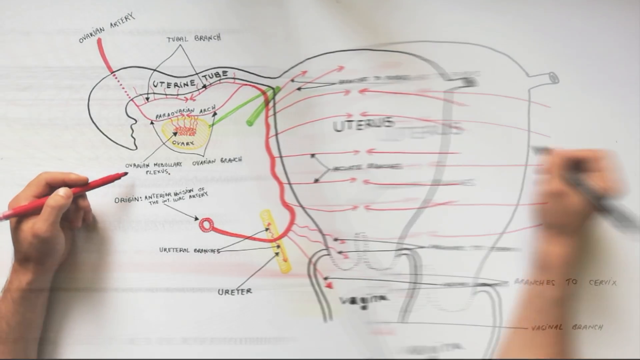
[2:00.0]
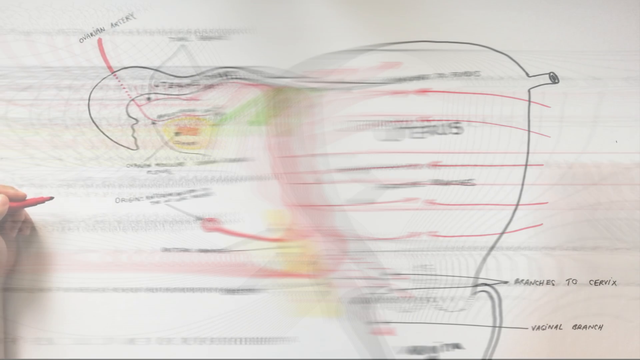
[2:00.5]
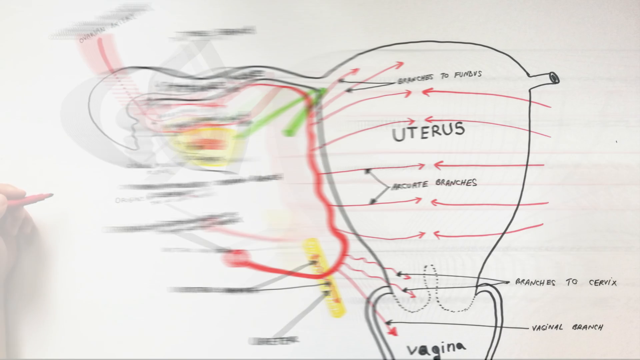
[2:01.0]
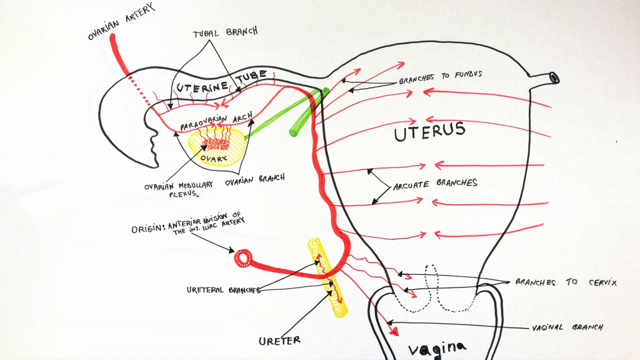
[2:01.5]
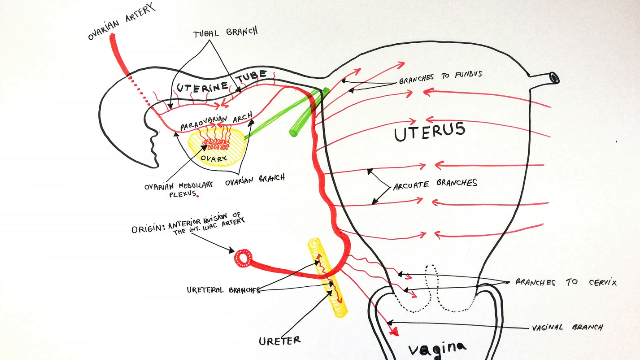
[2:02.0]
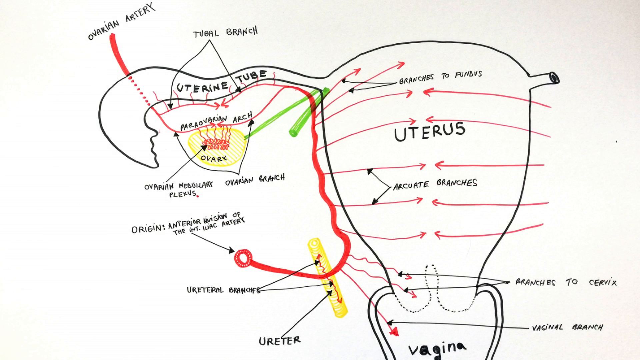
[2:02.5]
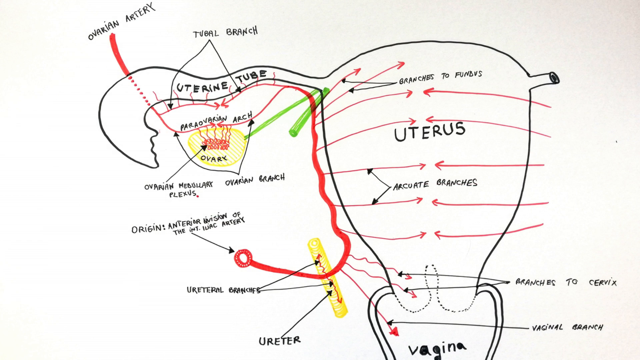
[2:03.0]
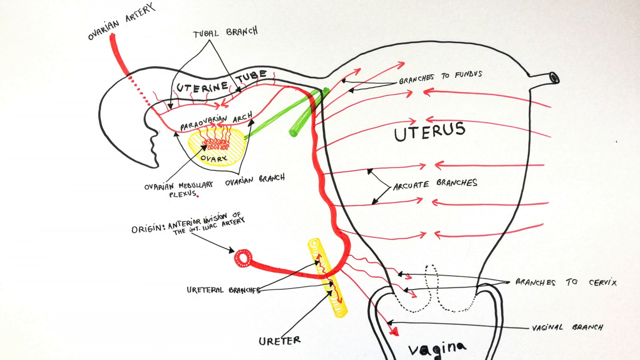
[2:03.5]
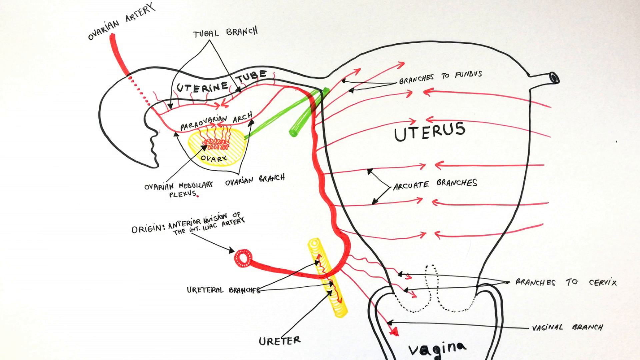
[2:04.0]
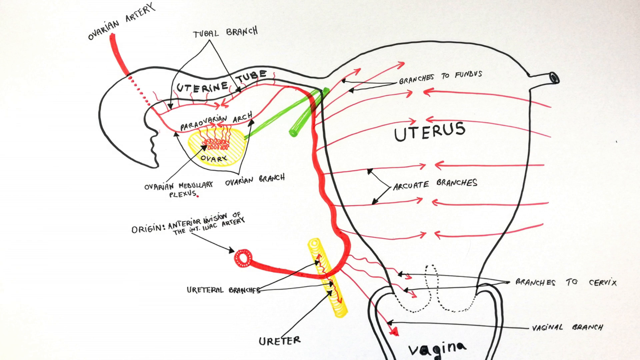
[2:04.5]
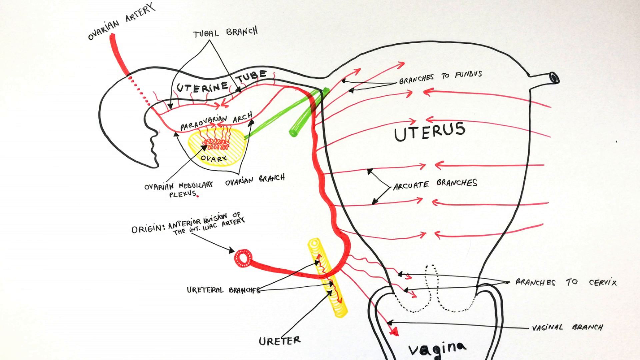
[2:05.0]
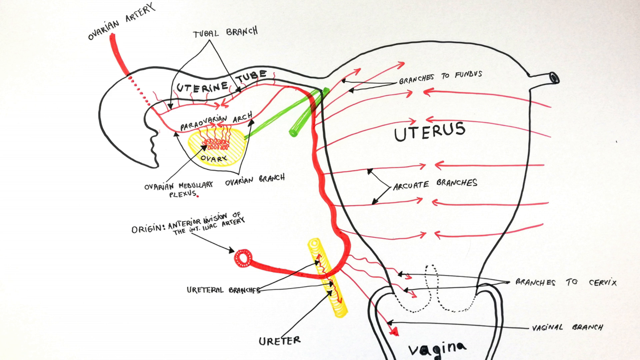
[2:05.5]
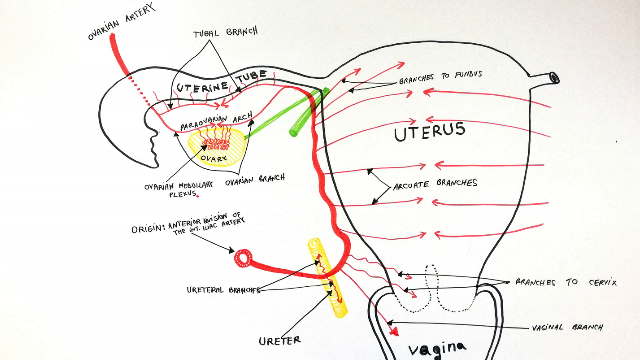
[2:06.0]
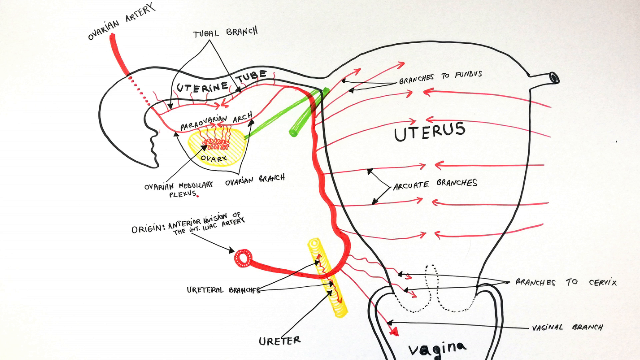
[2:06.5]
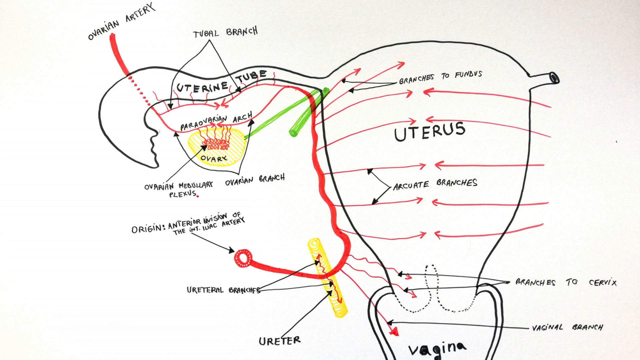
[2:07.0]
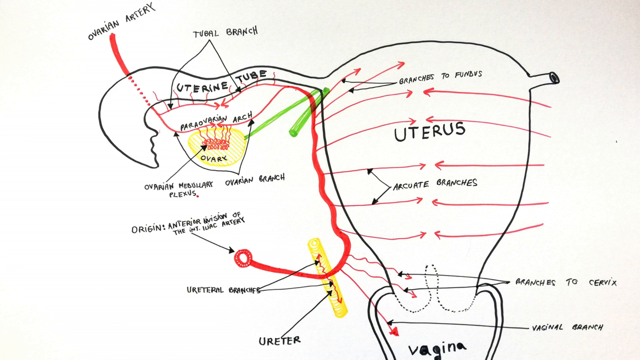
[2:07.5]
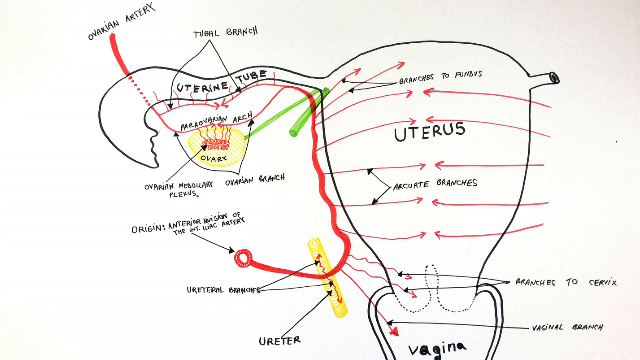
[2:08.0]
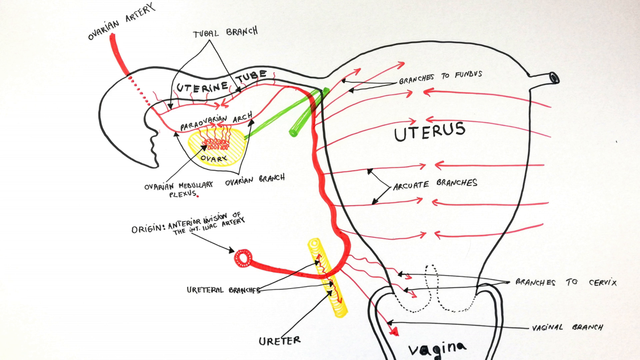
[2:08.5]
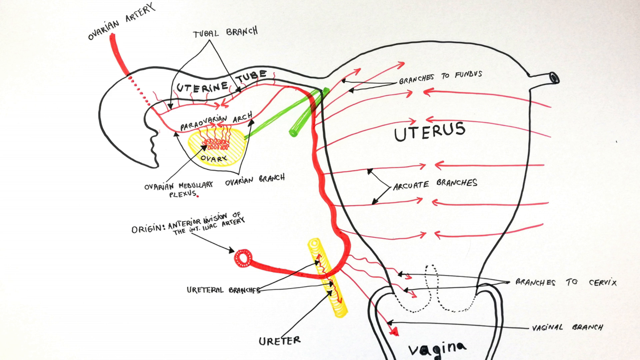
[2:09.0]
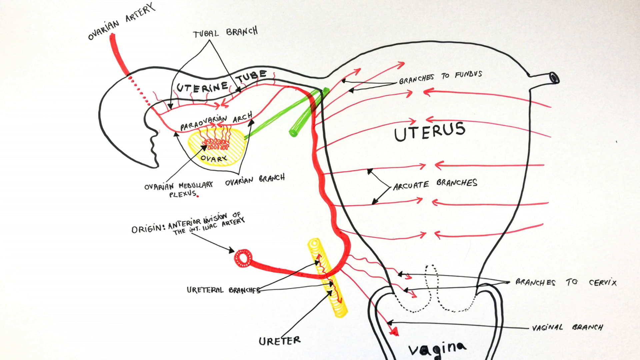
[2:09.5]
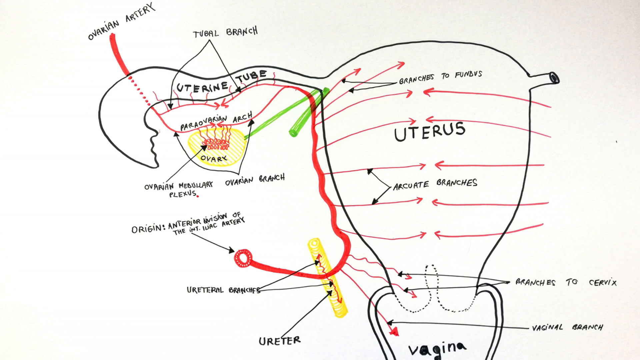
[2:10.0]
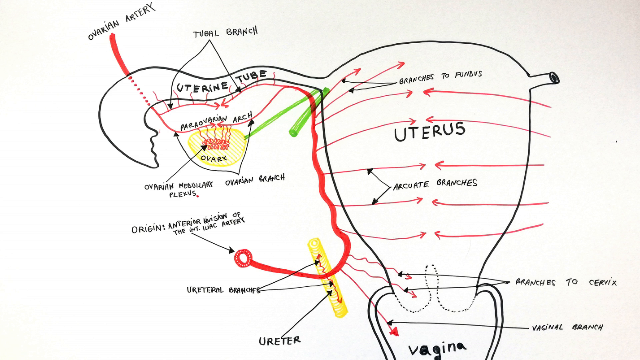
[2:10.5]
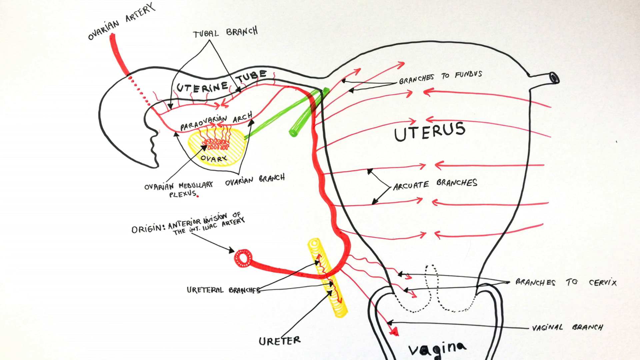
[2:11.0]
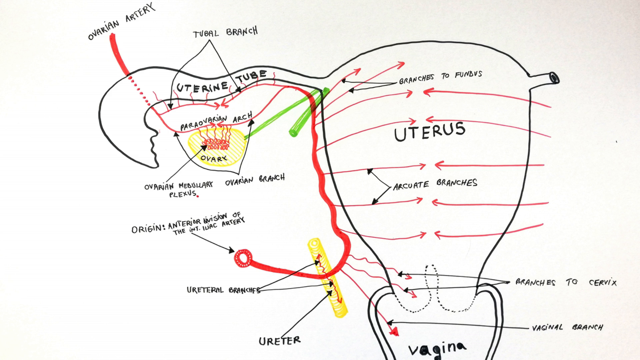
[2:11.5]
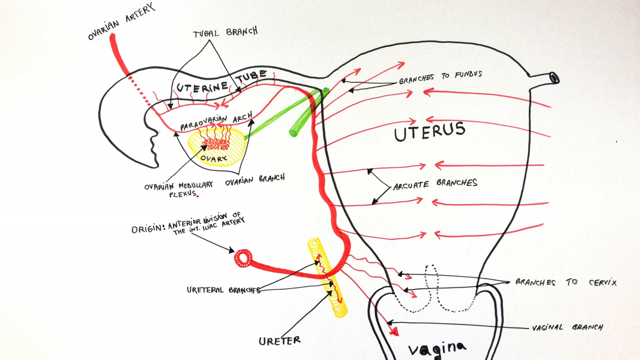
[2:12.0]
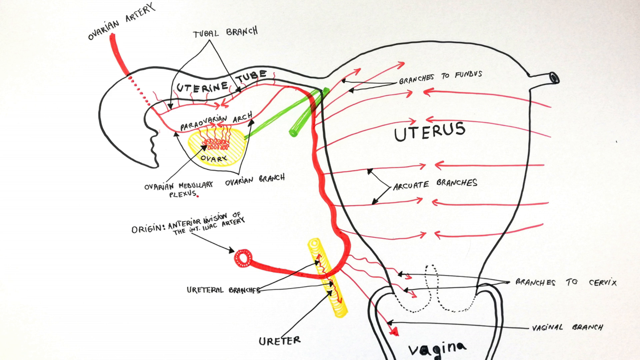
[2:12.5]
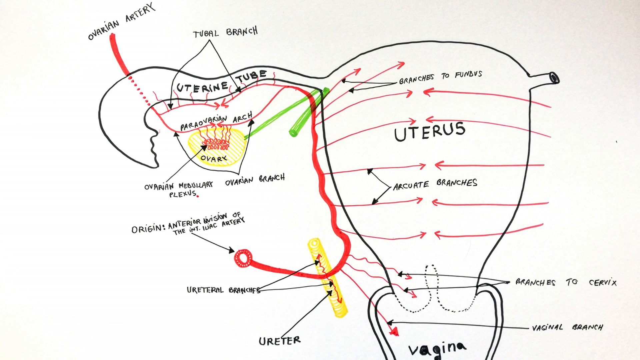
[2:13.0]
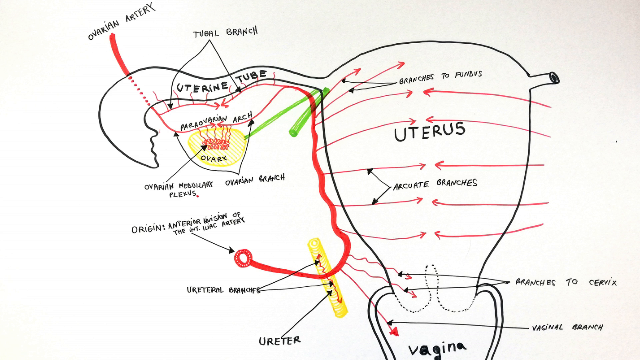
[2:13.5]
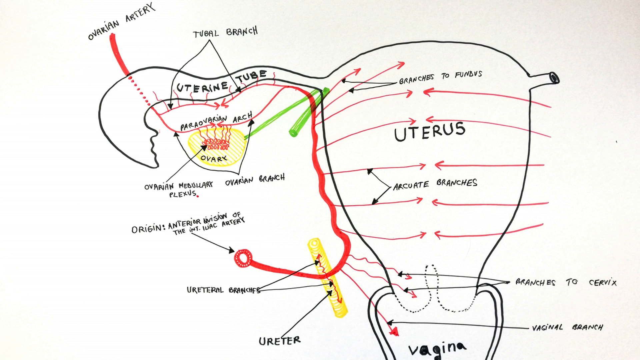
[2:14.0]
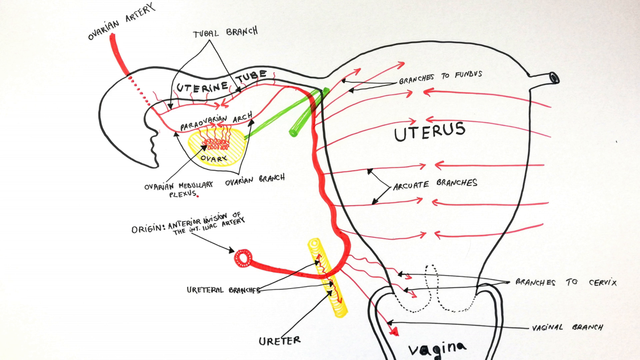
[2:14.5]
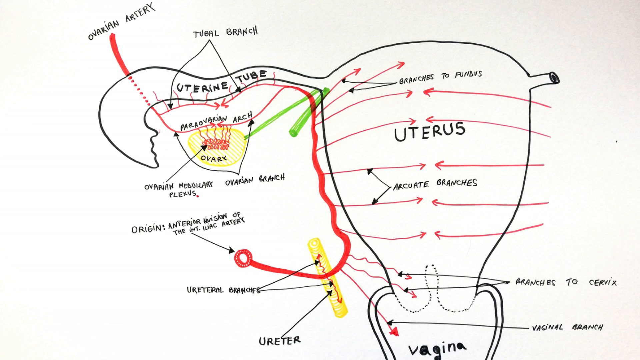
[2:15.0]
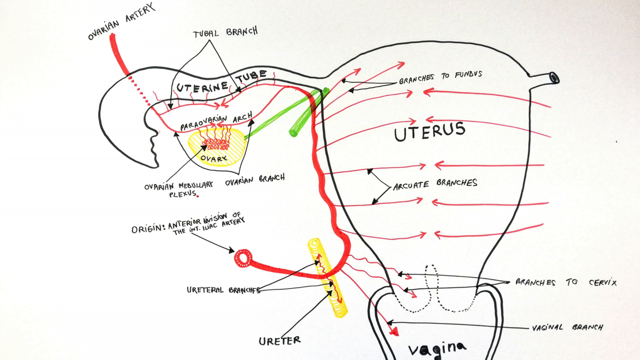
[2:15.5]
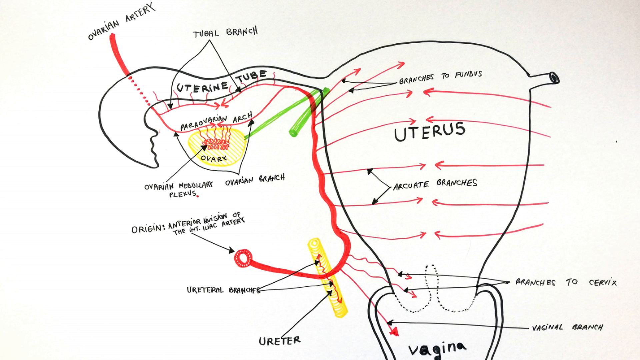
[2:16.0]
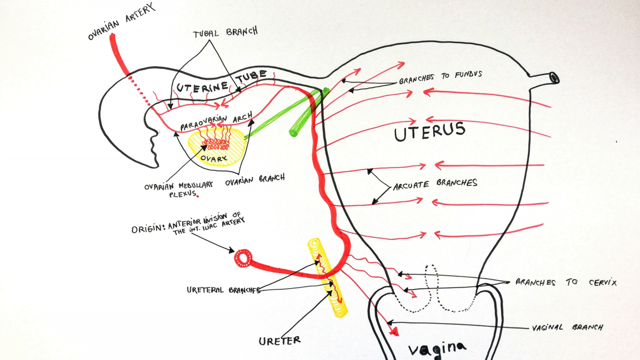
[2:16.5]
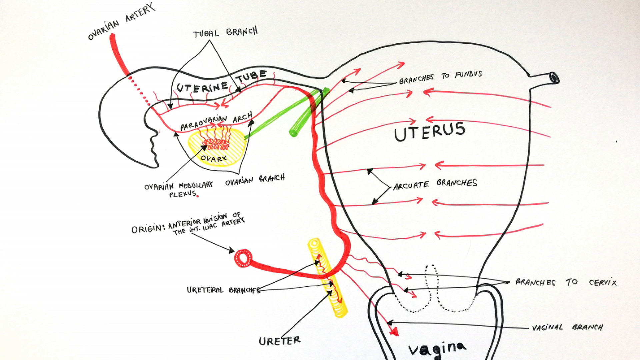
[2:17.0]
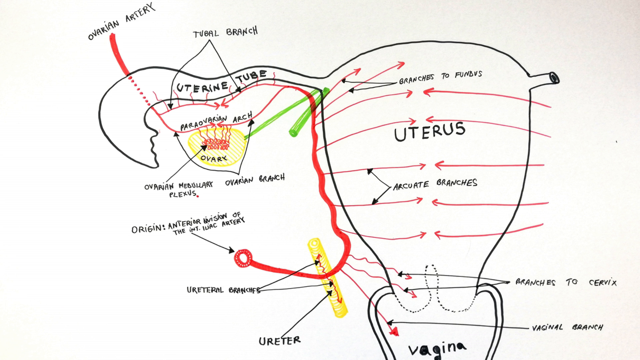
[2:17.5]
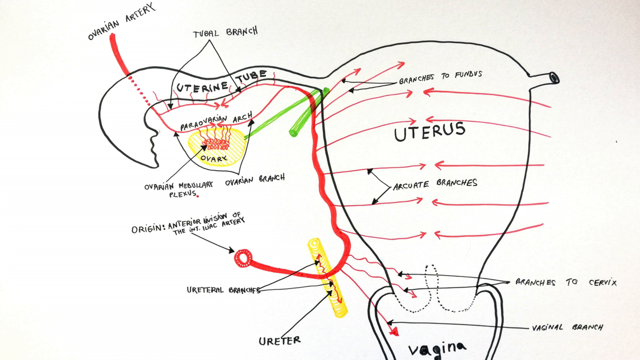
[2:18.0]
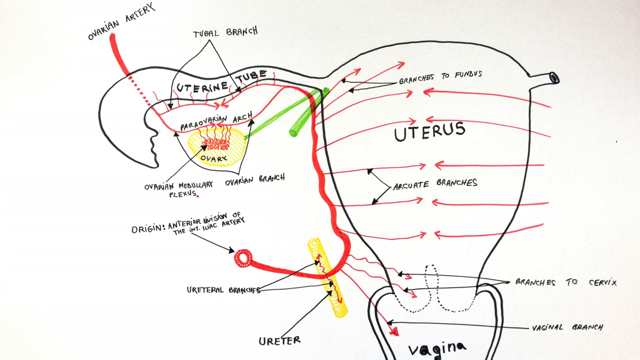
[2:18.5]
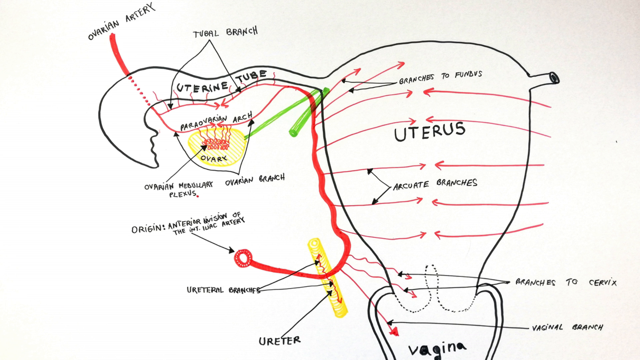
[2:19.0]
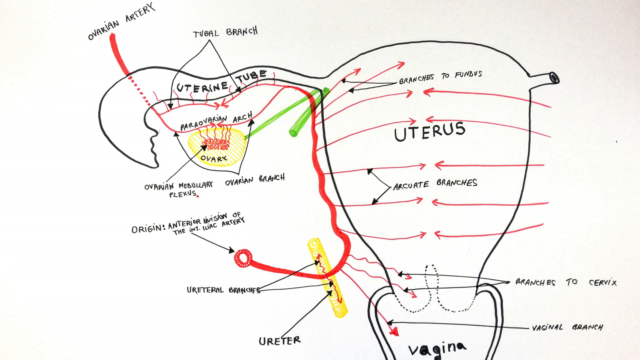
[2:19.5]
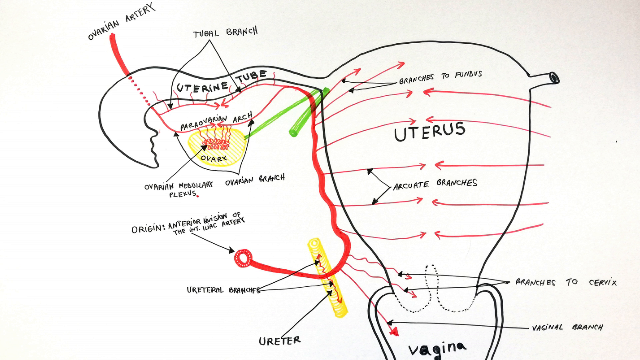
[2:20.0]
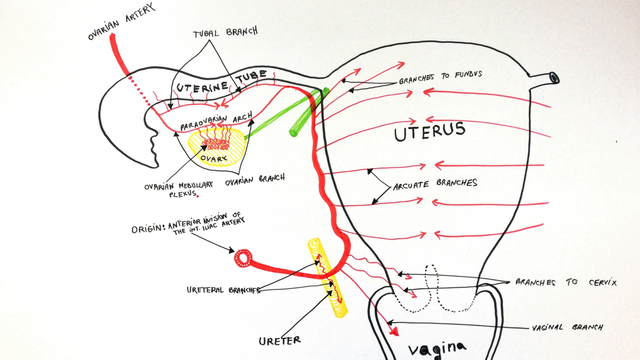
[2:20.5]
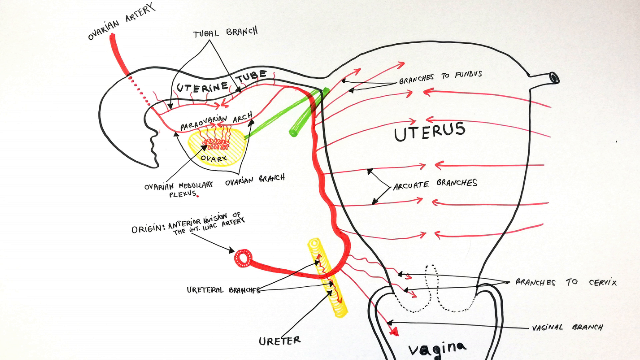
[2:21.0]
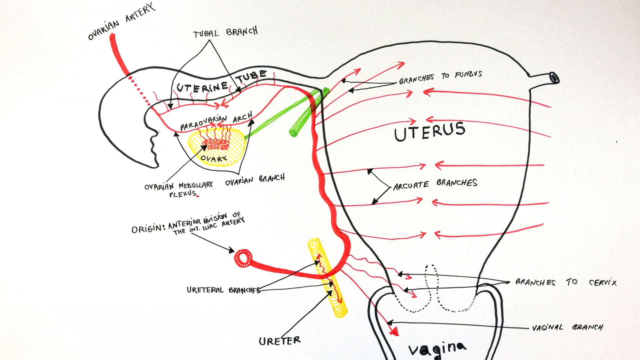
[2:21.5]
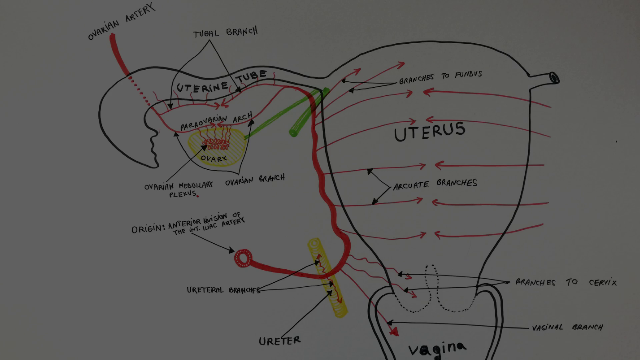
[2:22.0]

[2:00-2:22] A white screen shows a marker drawing of a uterus: an oval shape labeled "uterus" in black. Red arrows come from outside the uterus and go into it on both sides. Along the bottom of the oval, two tubes come out from both sides, with the word "vagina" written in black between them. At the very top left, another tube is drawn off the oval with "uterine tube" inside it. Underneath that is a circle drawn with a yellow marker, with "ovary" written inside it in black and some red wiggly lines inside the circle. Underneath the ovary is a label beginning "ovarian", with an arrow drawn pointing to it. Below that is a small yellow tube with the word "ureter" underneath it and an arrow pointing to it.